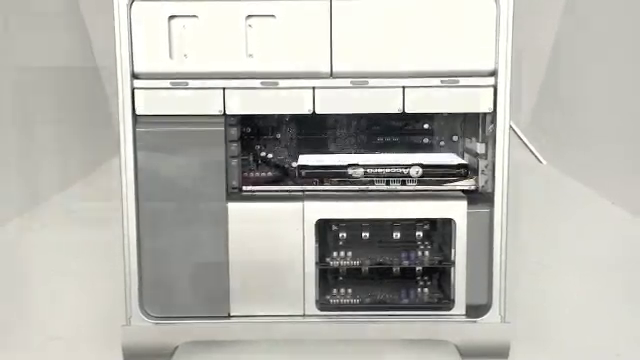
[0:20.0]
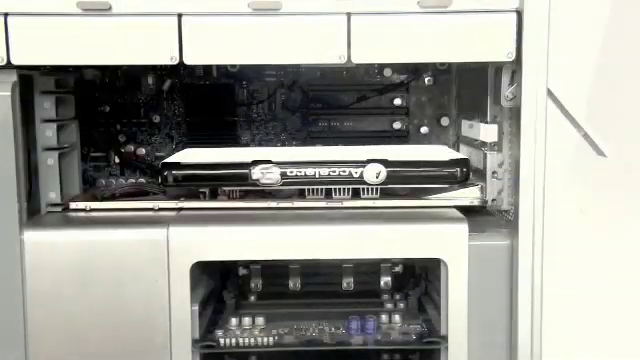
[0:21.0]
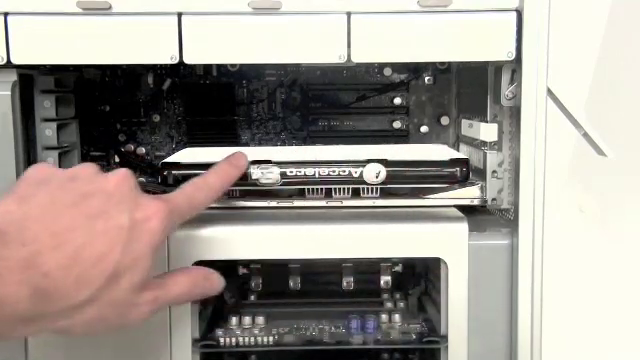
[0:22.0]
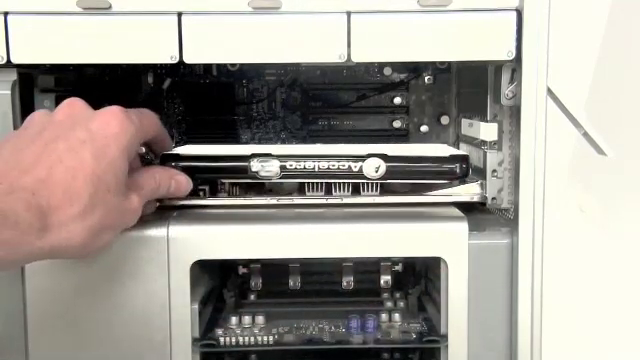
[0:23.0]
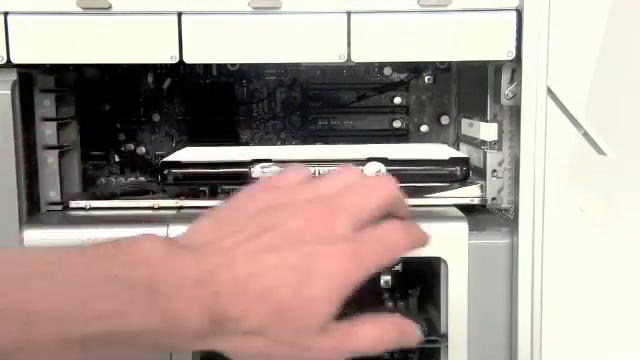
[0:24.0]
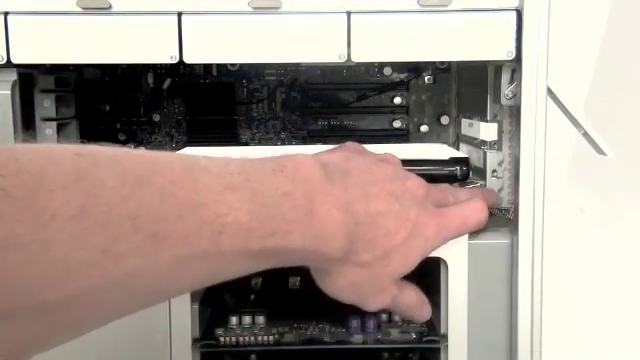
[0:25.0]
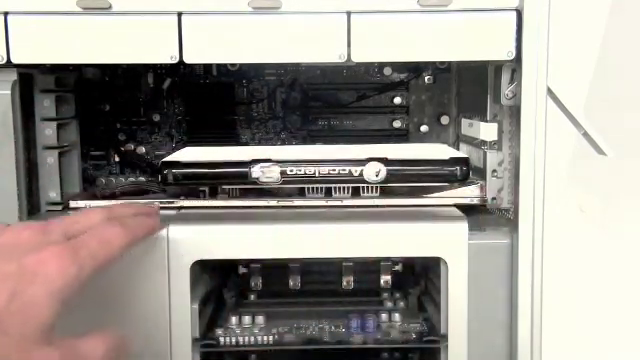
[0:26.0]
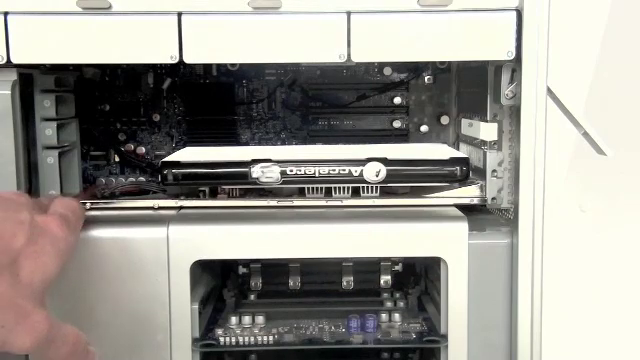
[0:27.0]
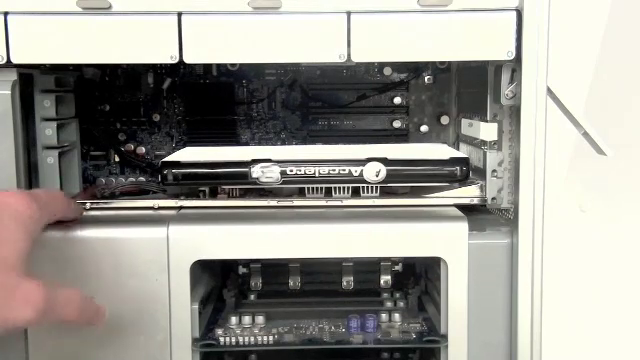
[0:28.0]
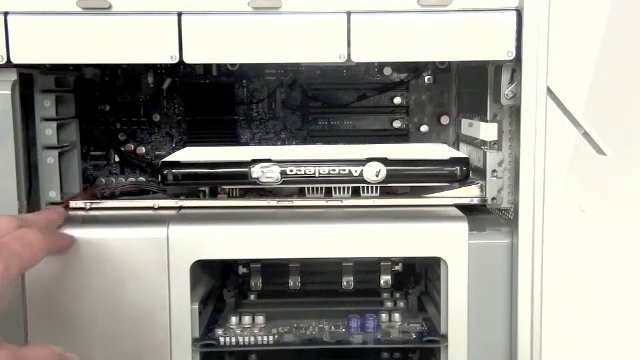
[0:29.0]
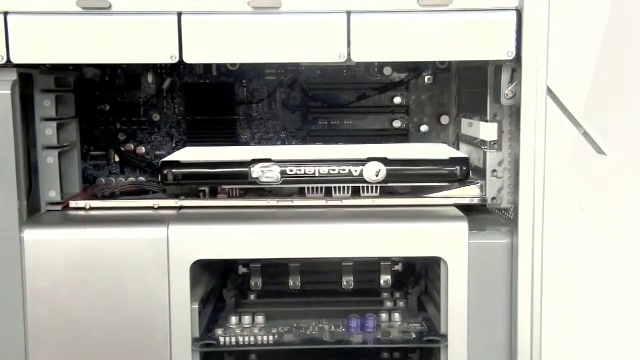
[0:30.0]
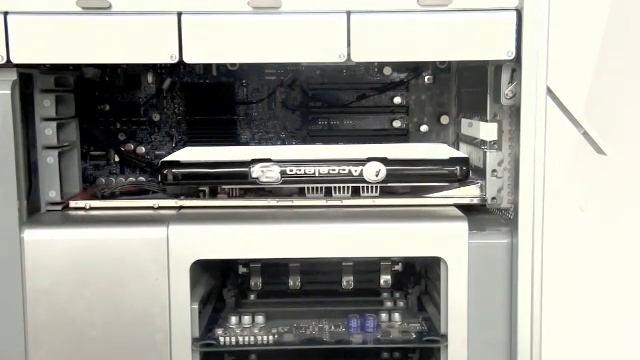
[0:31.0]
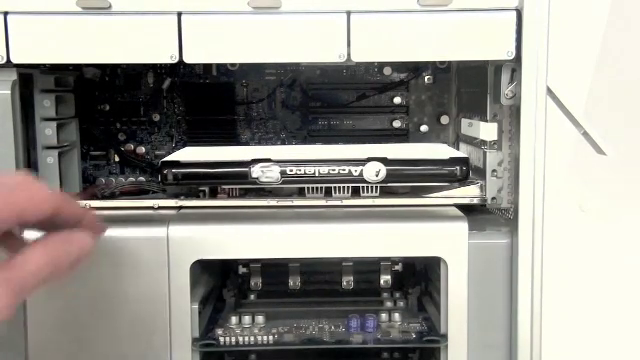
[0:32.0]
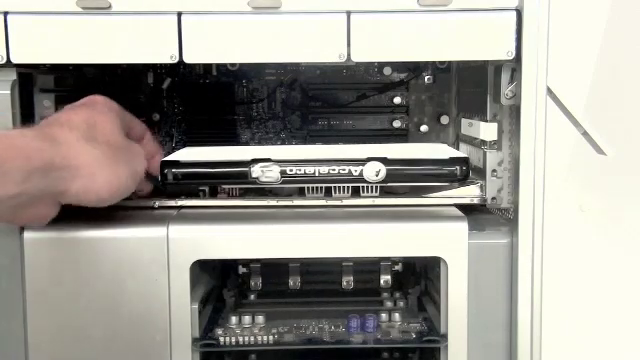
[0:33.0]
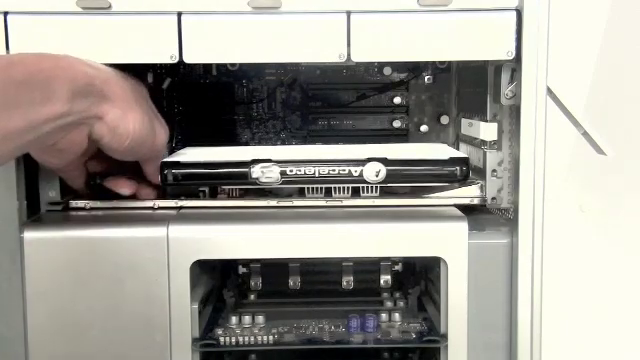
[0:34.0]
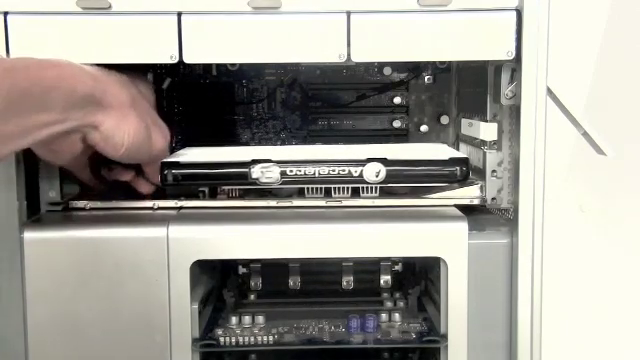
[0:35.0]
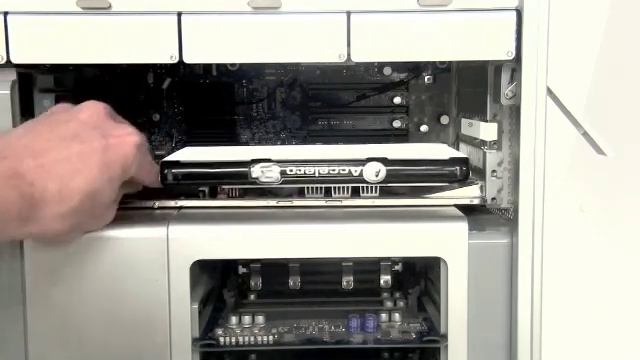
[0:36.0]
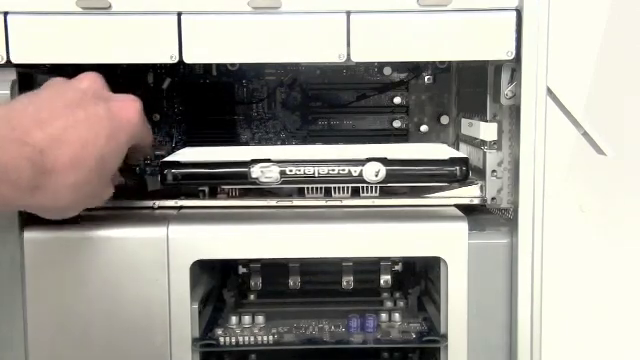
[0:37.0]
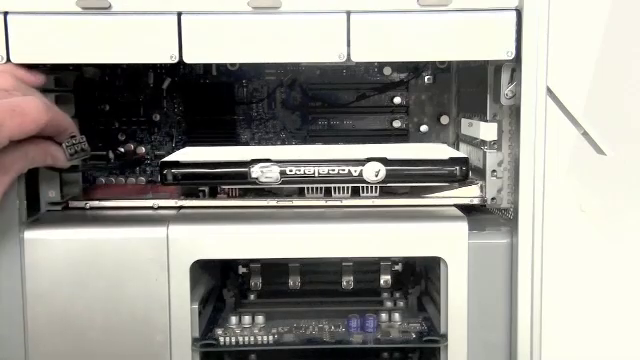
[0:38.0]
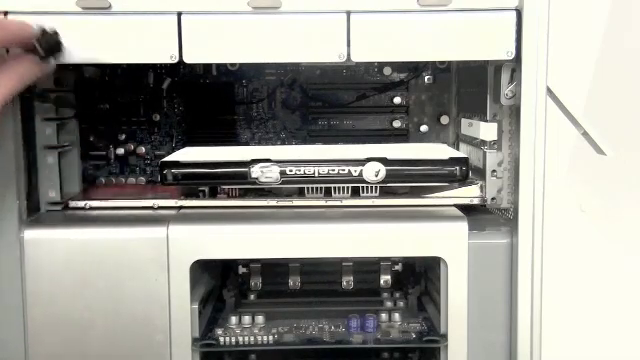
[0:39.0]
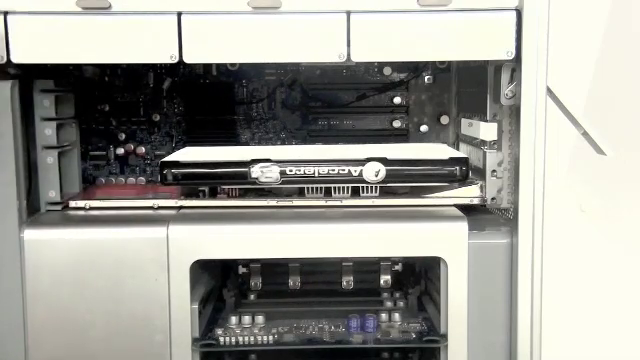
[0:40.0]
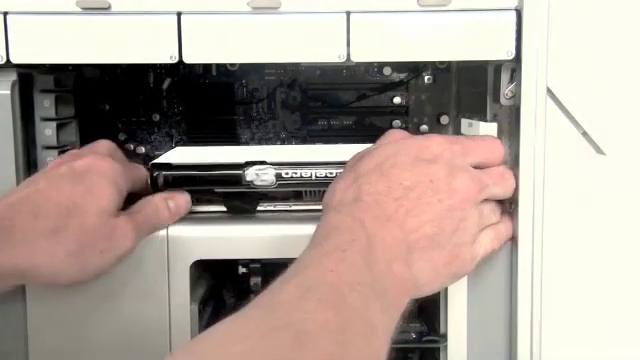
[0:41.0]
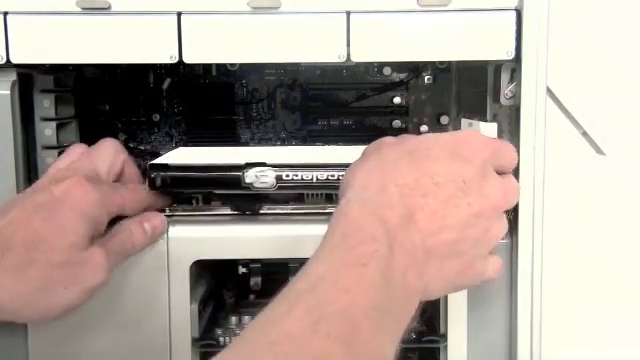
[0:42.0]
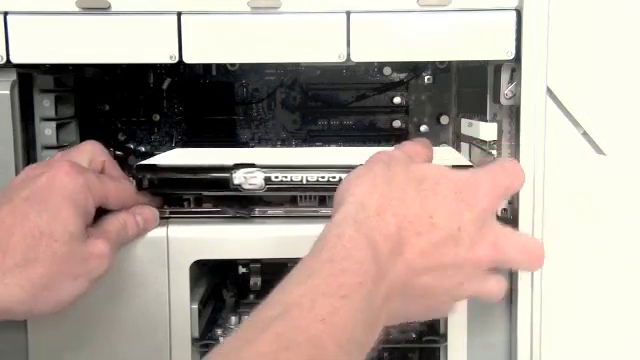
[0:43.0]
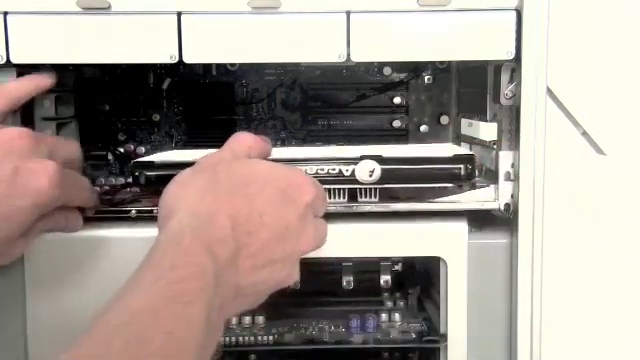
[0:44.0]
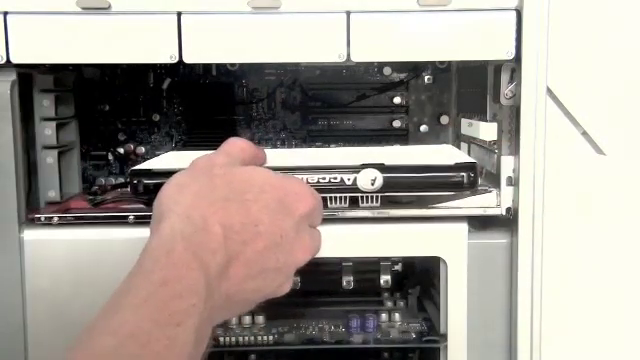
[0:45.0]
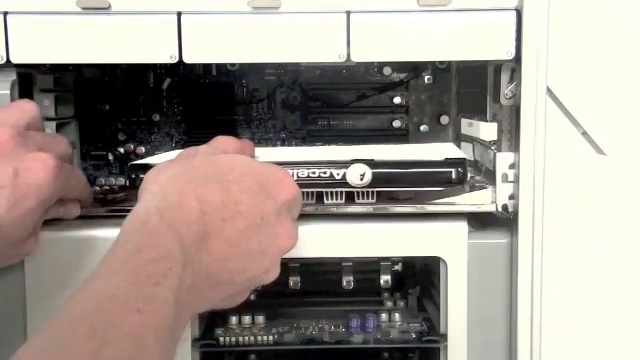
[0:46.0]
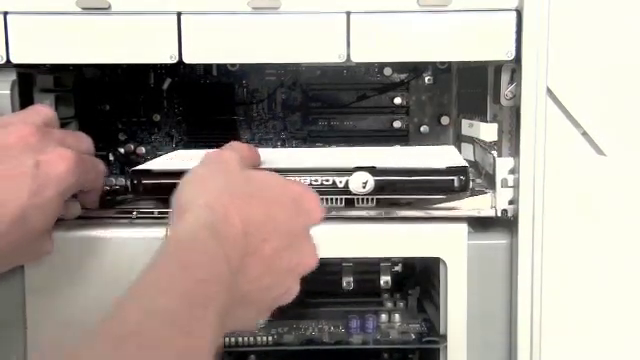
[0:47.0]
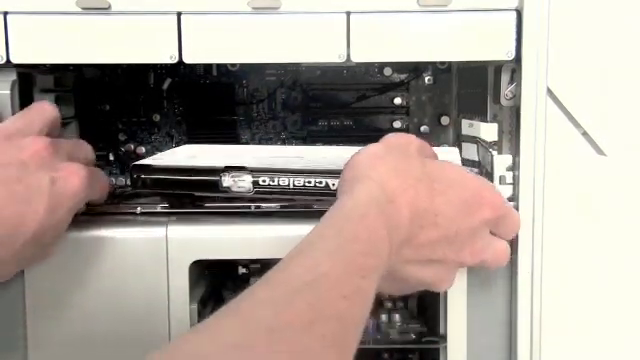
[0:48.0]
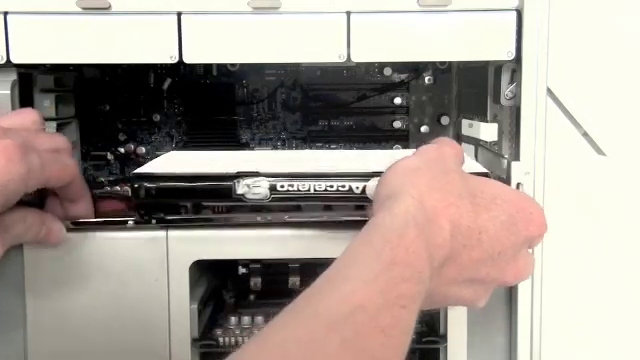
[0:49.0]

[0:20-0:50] The camera zooms into the top part of the computer, showing the inside of the Mac Pro. The man points at a part inside and drags his finger across the whole piece, then pushes on its right side and its left side. In a still image of the top of the computer, he puts his left hand inside and moves some wires to disconnect them from the part he pointed at. He then brings both hands into frame and pulls the part out of the computer, sliding it very carefully. By the end, the part is almost fully out, just barely hanging inside the computer case, while his hands hold on to it very tightly.